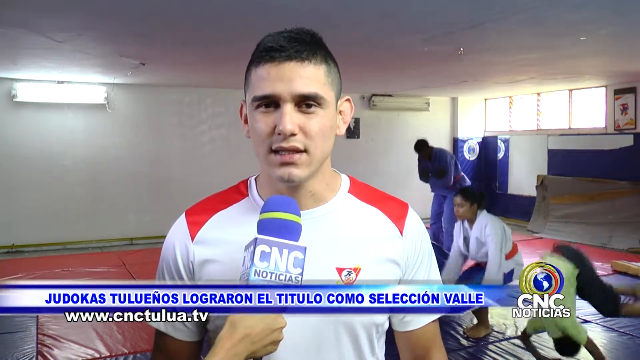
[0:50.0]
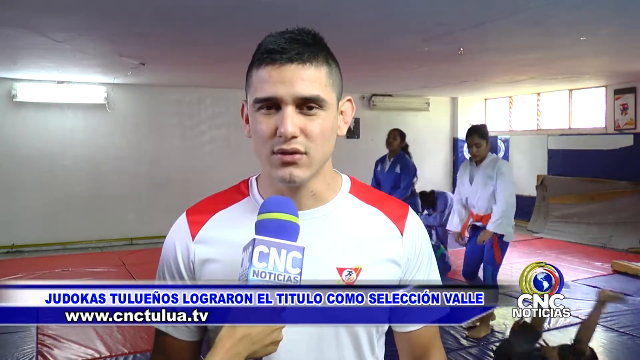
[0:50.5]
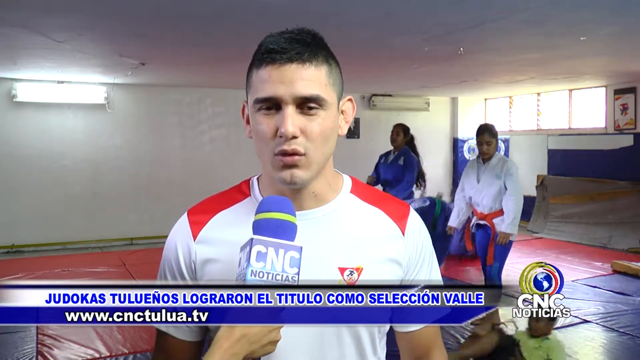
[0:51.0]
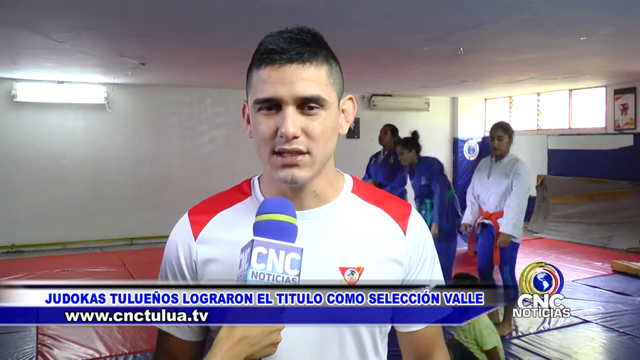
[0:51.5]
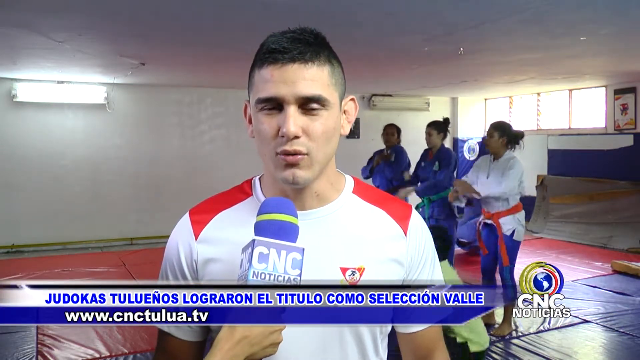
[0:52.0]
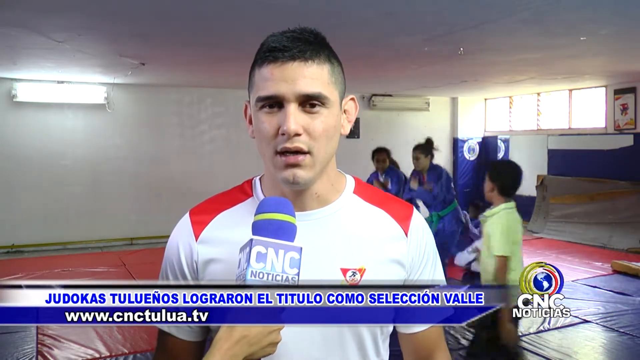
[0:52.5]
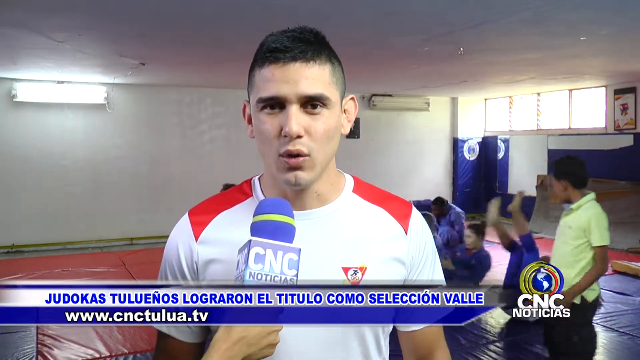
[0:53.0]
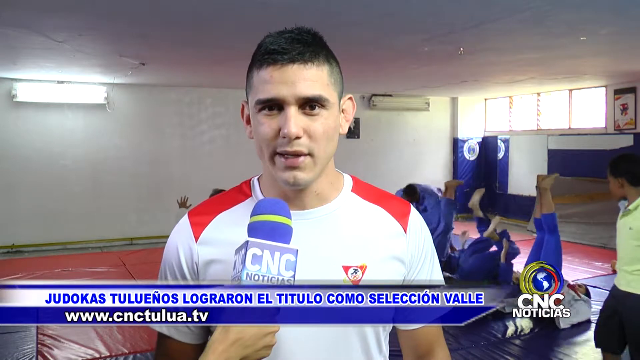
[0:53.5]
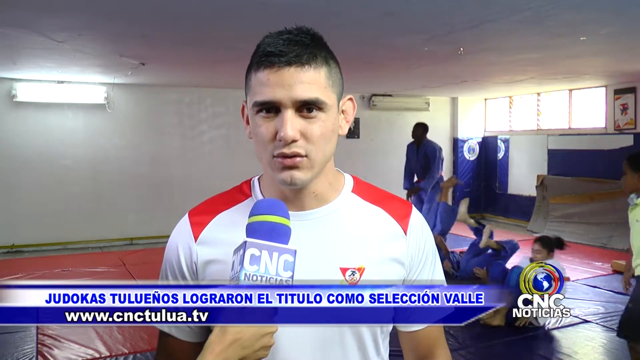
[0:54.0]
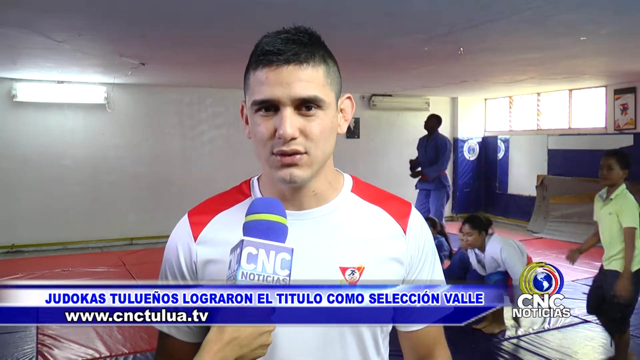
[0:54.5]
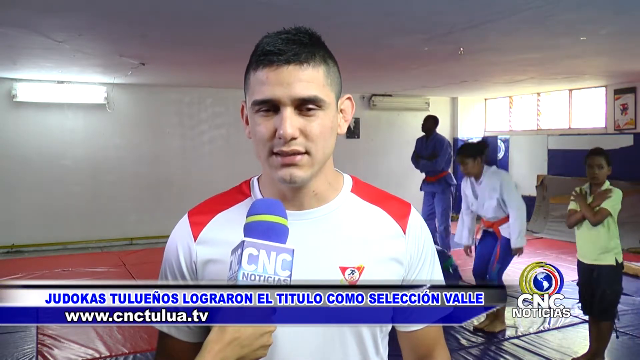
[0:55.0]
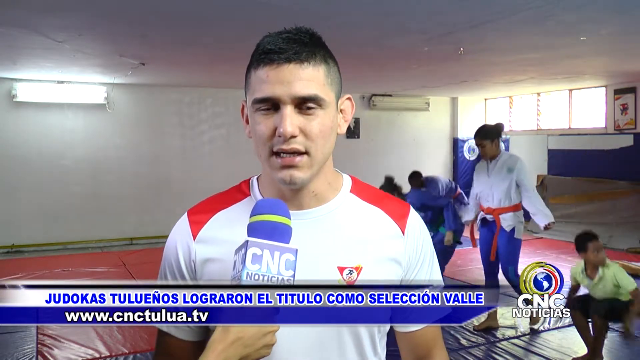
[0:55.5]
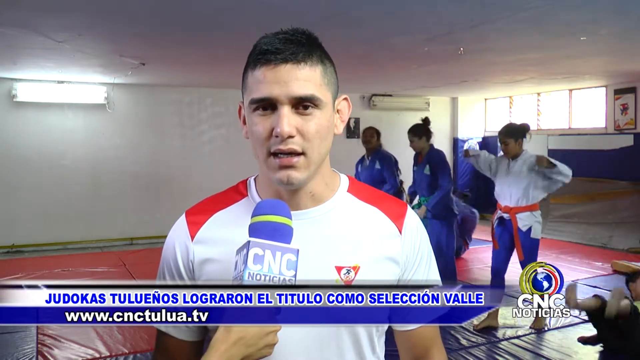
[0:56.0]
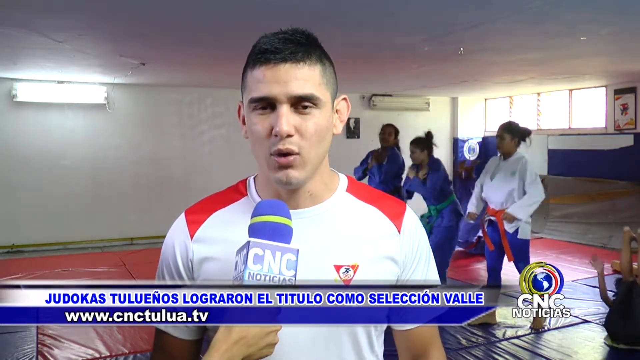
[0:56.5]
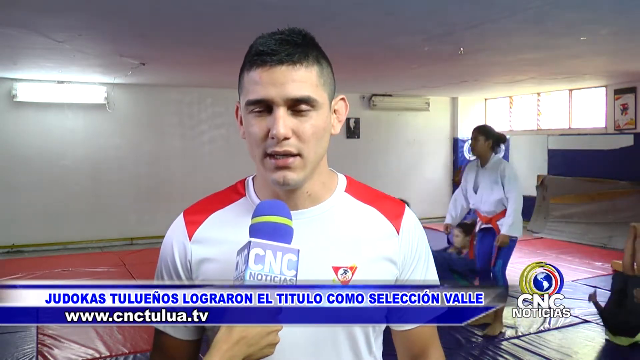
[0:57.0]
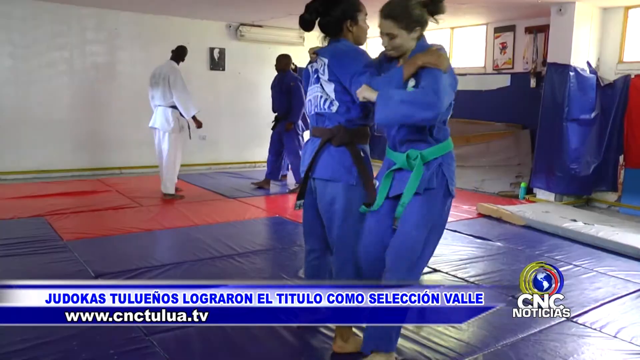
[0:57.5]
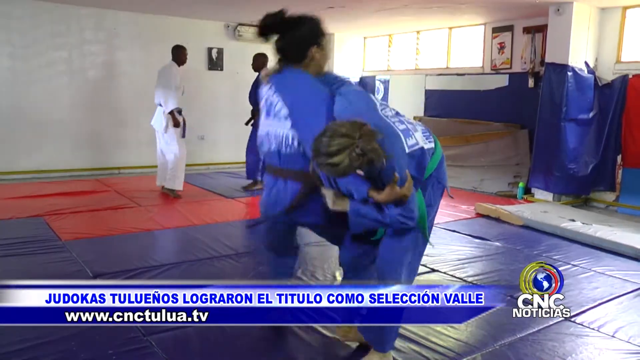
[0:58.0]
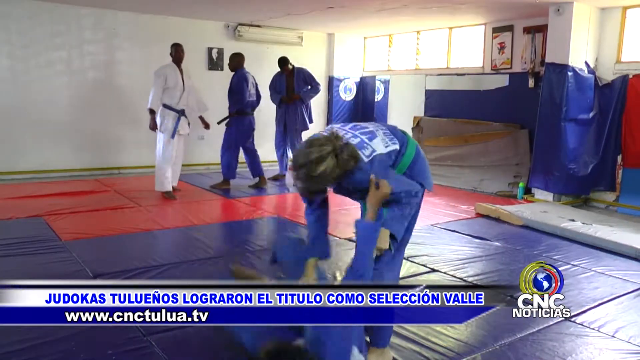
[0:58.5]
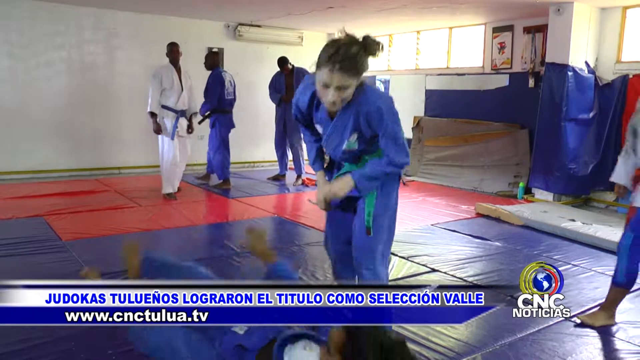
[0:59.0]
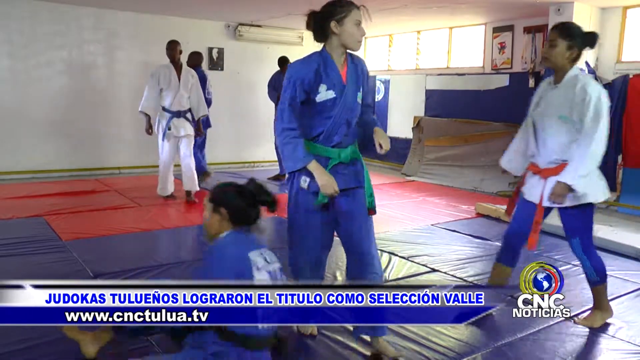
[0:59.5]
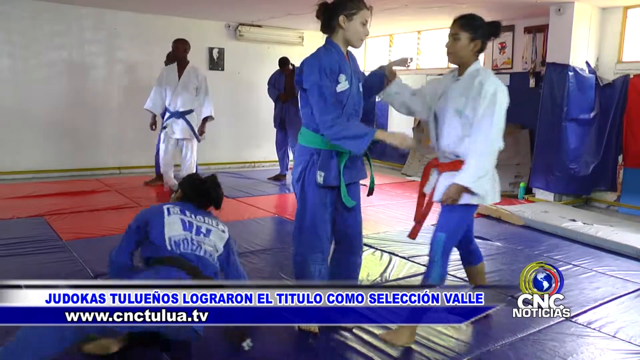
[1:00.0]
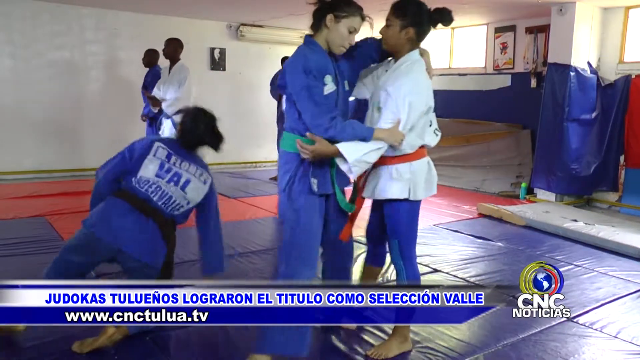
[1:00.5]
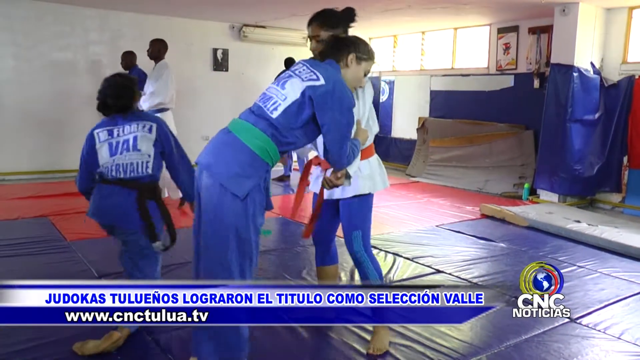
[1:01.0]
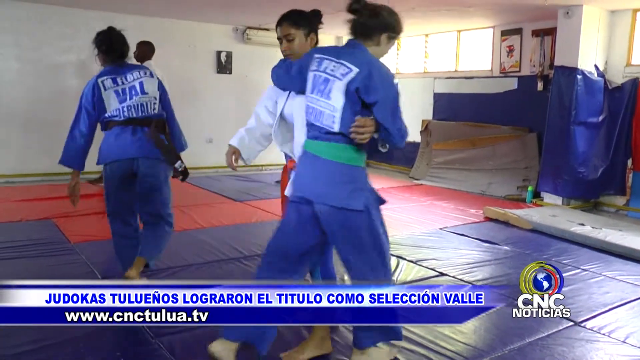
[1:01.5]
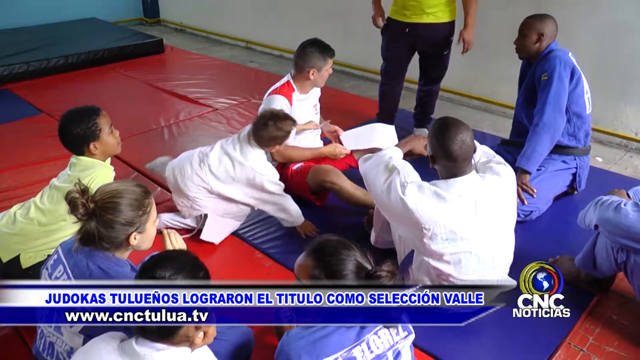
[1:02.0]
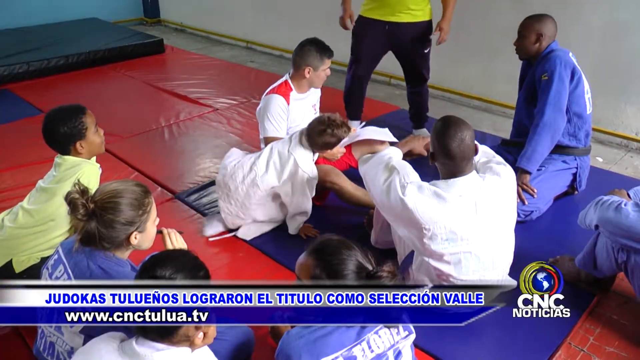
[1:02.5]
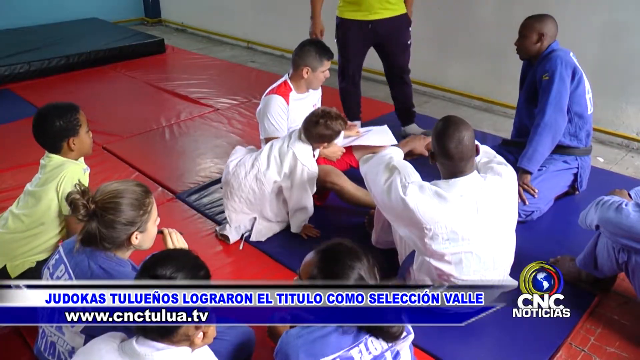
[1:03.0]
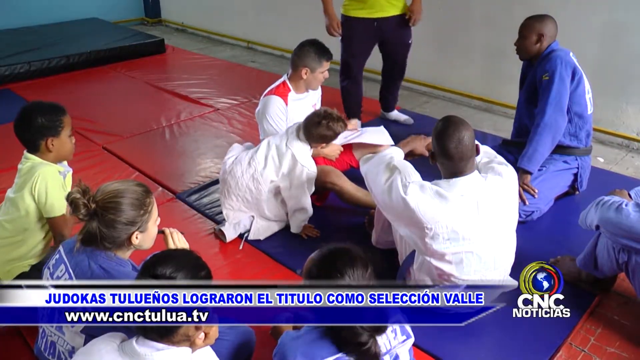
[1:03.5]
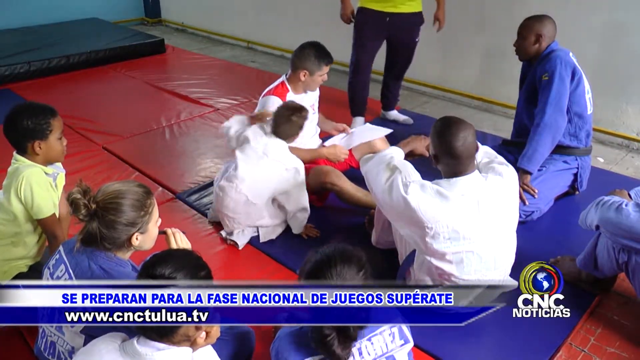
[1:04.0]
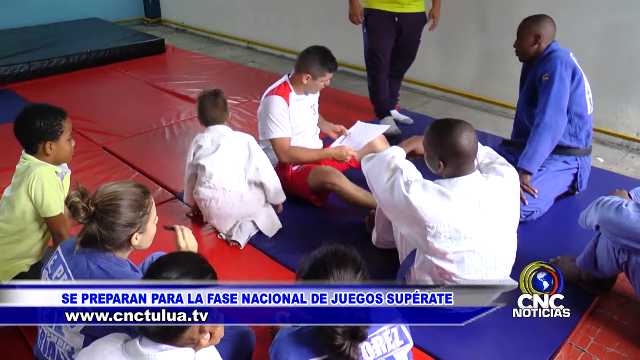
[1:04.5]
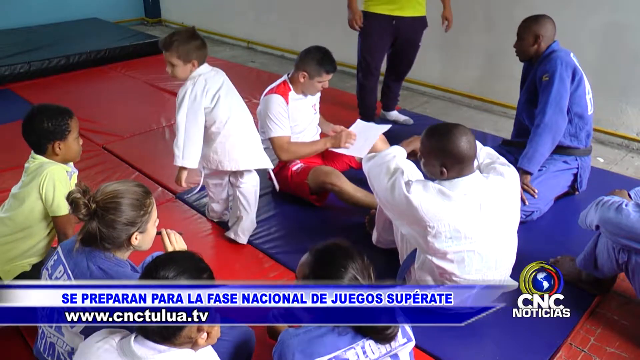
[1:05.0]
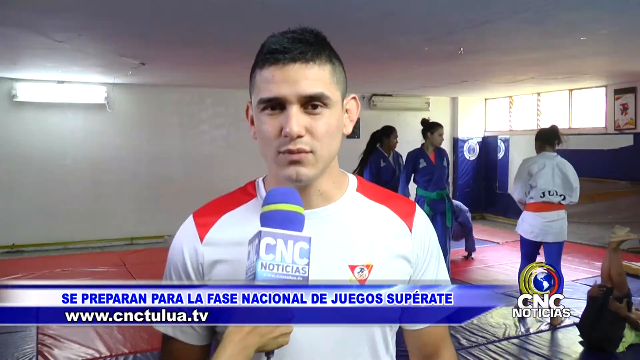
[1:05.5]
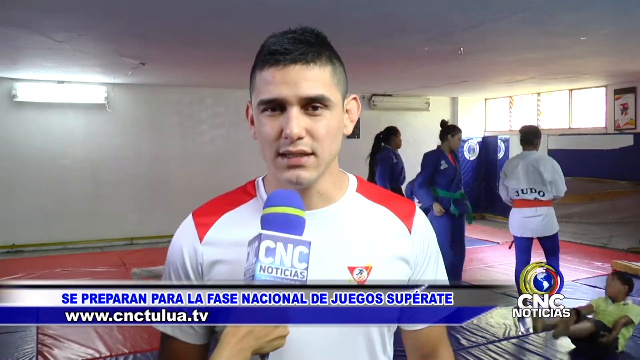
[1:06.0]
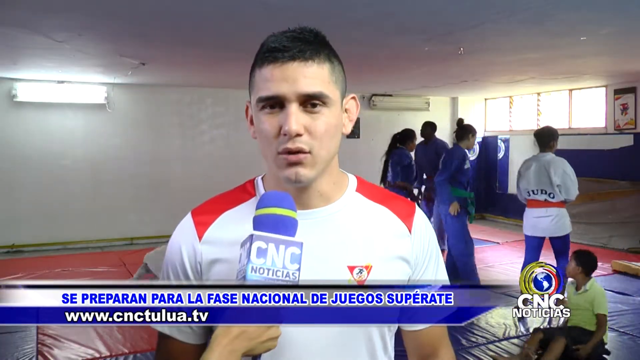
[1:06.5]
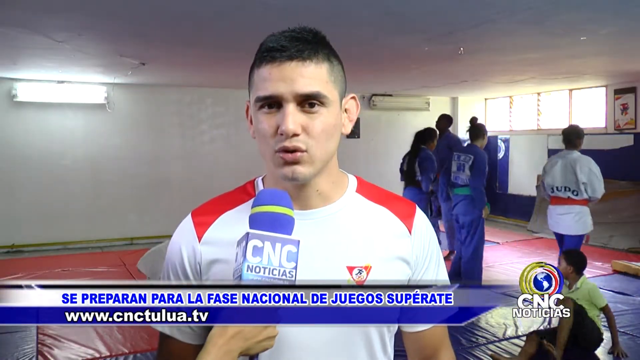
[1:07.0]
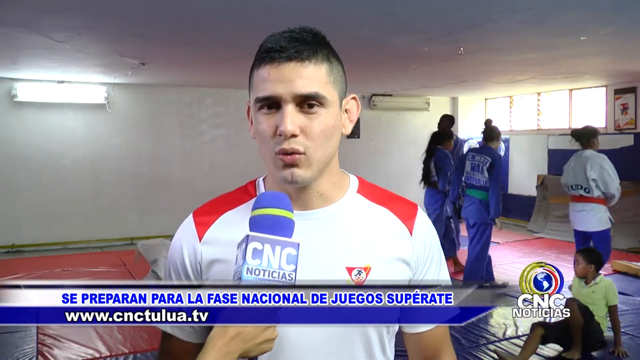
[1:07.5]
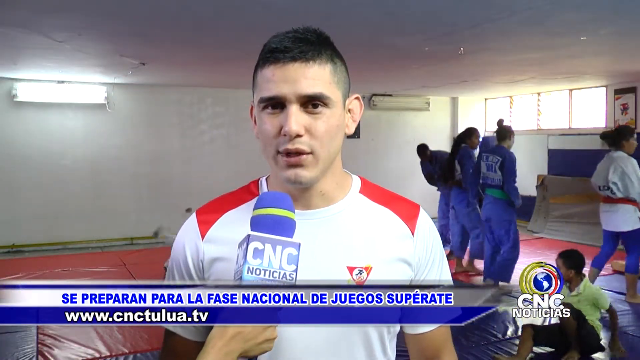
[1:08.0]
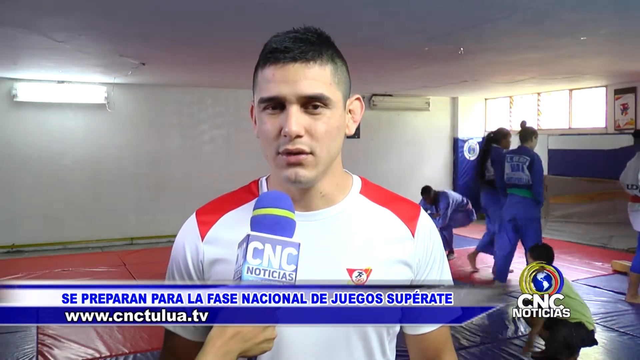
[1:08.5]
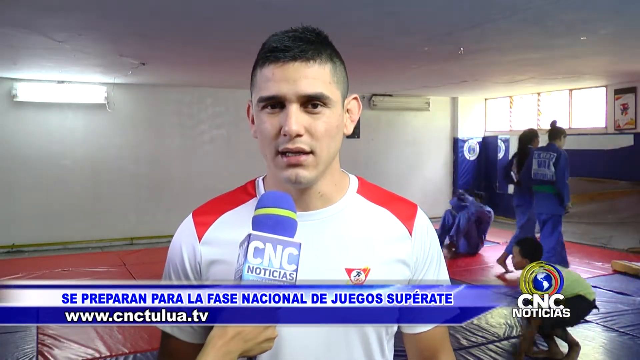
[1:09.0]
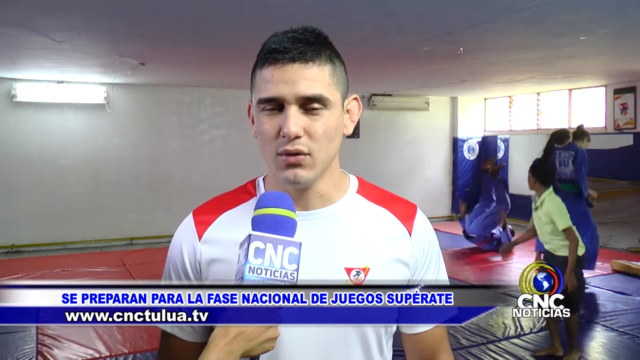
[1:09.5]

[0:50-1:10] The gym trainer continues speaking into the camera. Behind him, athletes do an exercise in which they stand up on their feet, fall down landing on their buttocks, sort of slide, and then stand back up. The video switches to what looks like sparring, with a grab-and-trip technique: two women do it to each other, then a third comes in and does the same. Then the trainer appears holding some sort of paper and a pen, with younger and older students around him sitting on a blue and red gym mat. The video returns to the same man continuing his interview as he speaks into the camera, while students in the background do all sorts of flips and exercises, working out together.